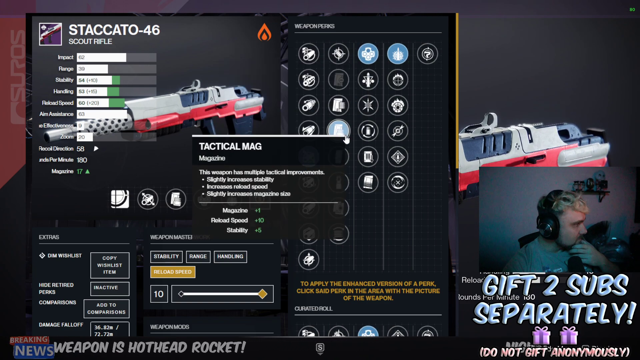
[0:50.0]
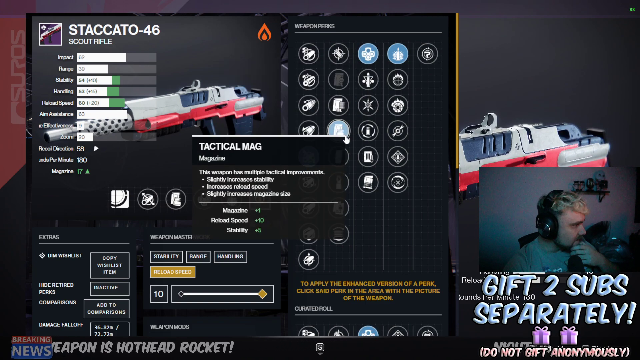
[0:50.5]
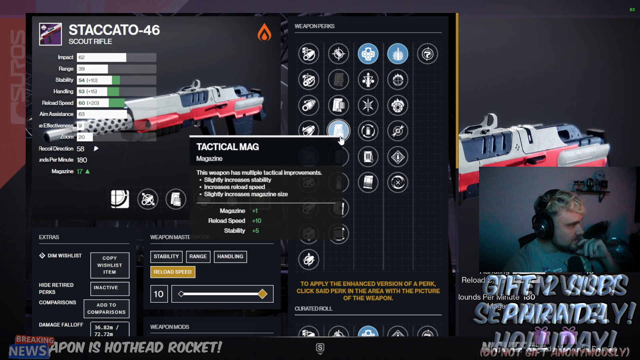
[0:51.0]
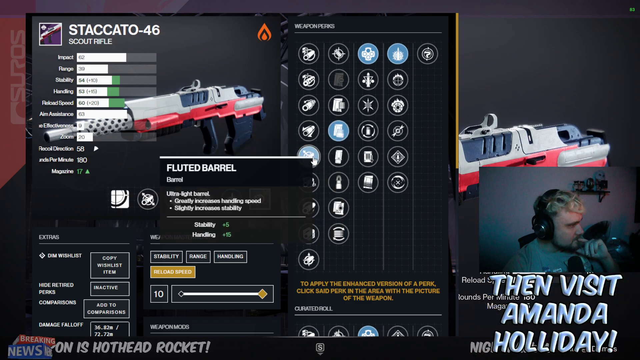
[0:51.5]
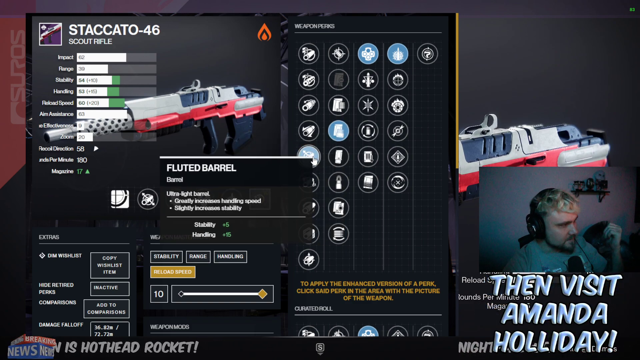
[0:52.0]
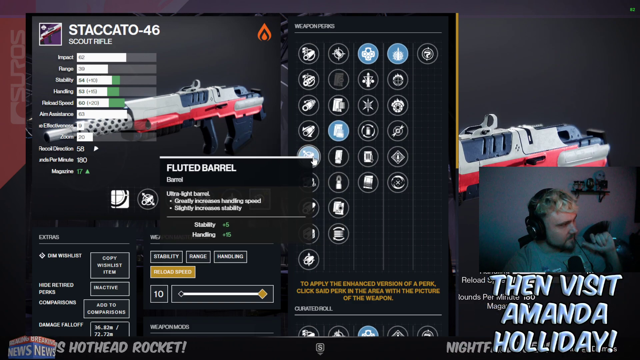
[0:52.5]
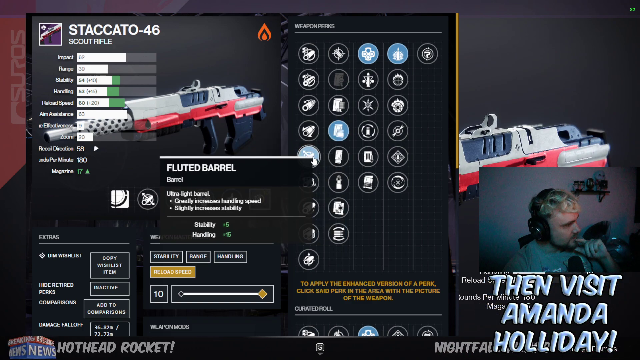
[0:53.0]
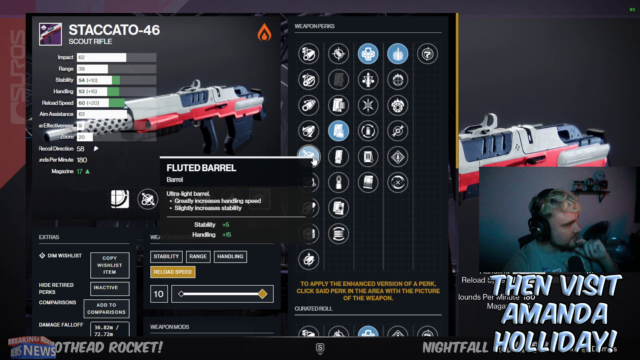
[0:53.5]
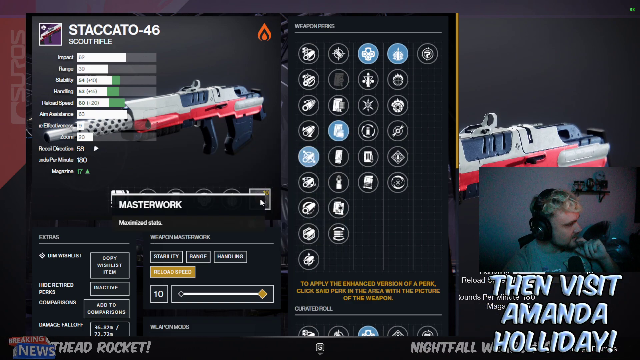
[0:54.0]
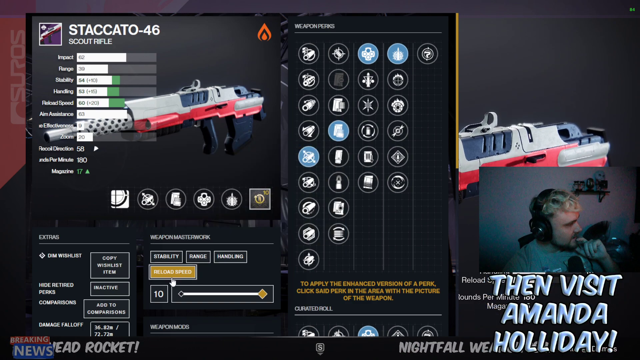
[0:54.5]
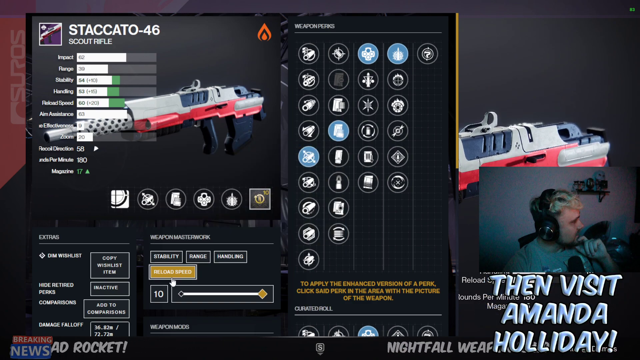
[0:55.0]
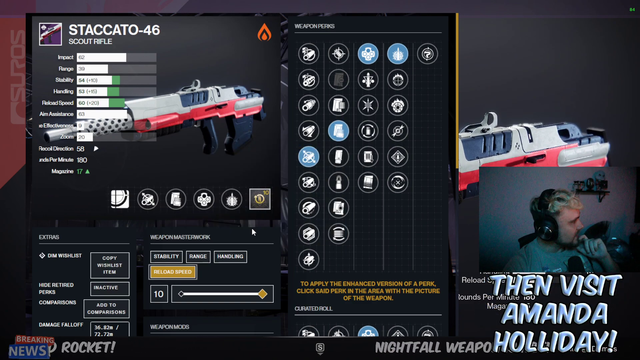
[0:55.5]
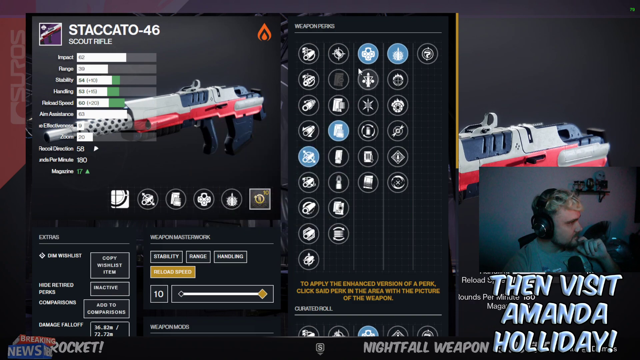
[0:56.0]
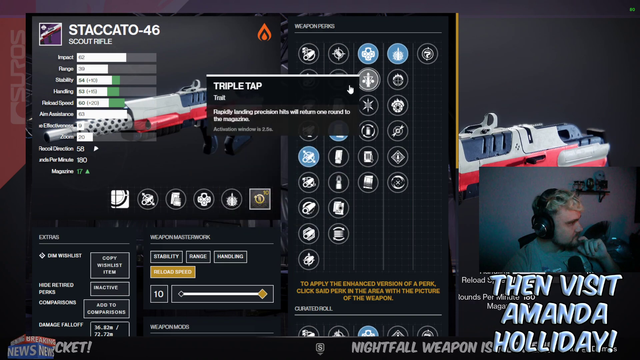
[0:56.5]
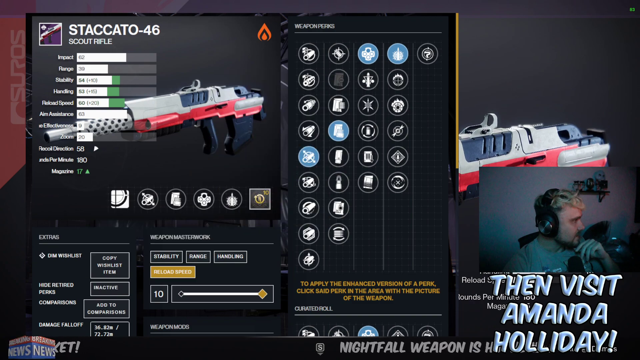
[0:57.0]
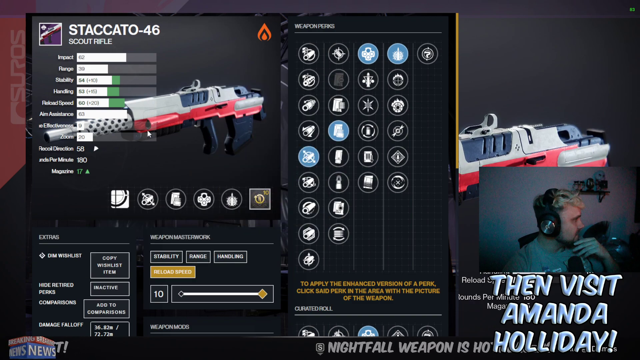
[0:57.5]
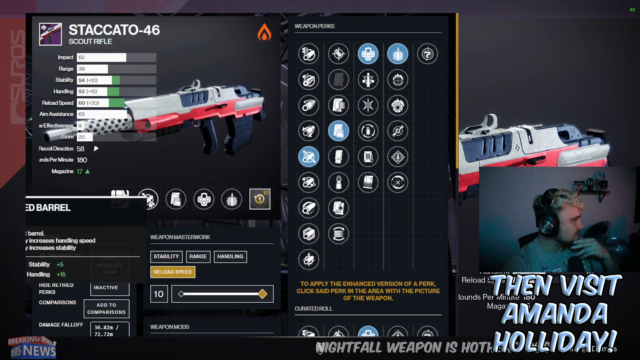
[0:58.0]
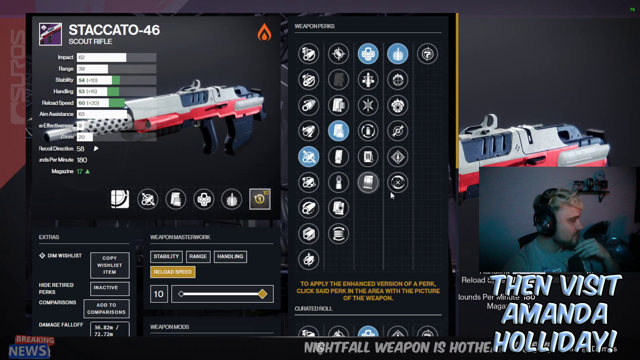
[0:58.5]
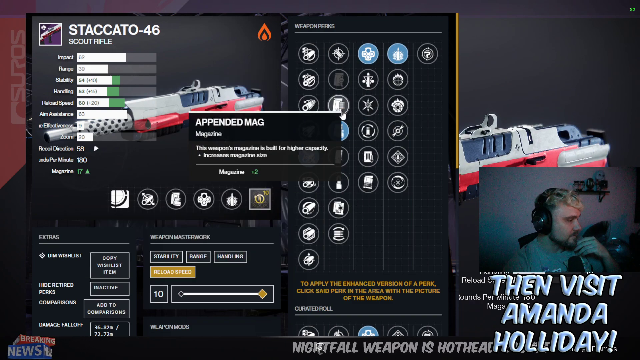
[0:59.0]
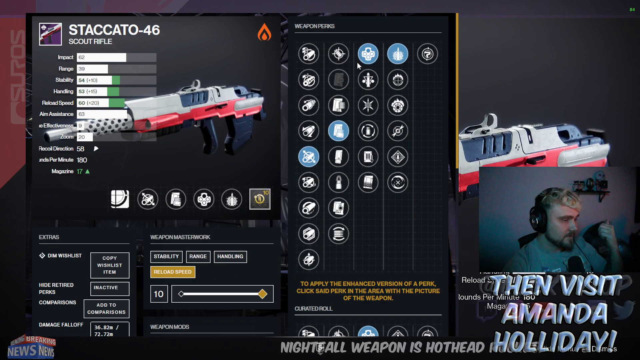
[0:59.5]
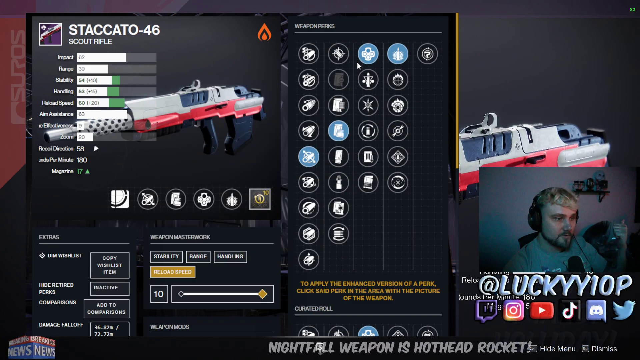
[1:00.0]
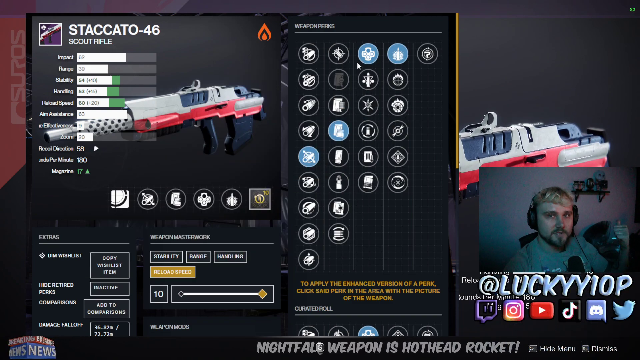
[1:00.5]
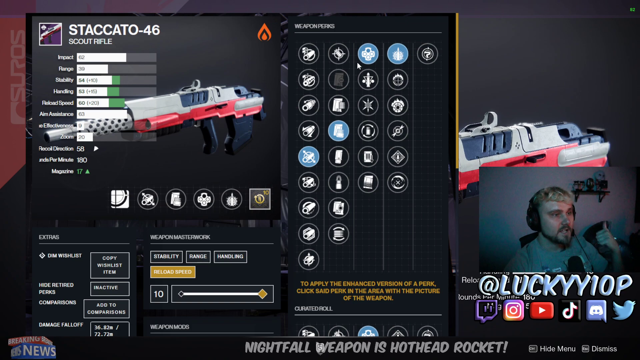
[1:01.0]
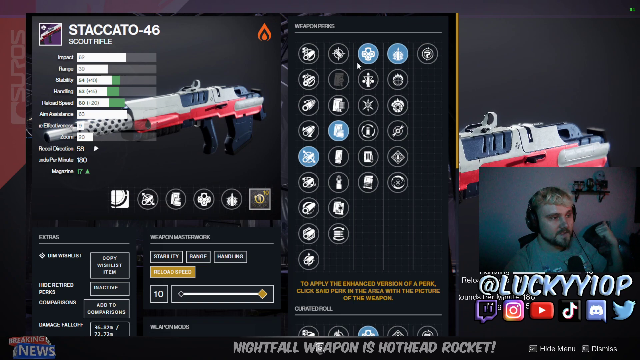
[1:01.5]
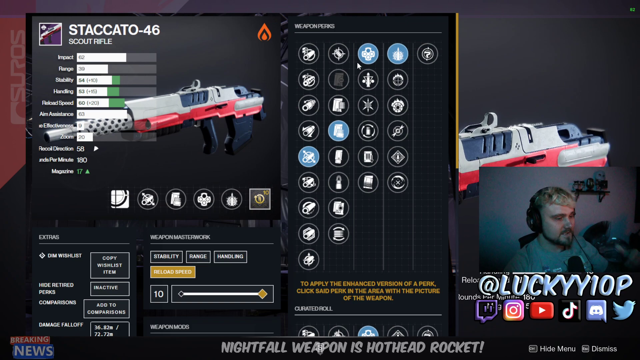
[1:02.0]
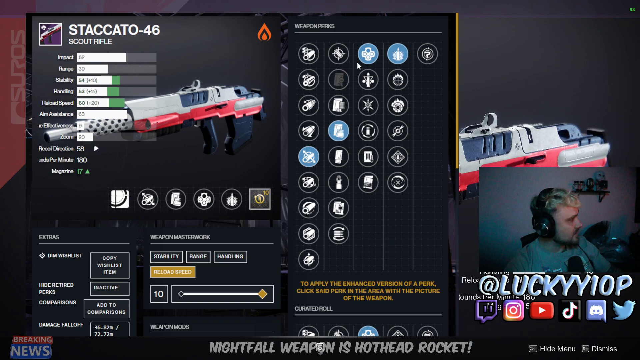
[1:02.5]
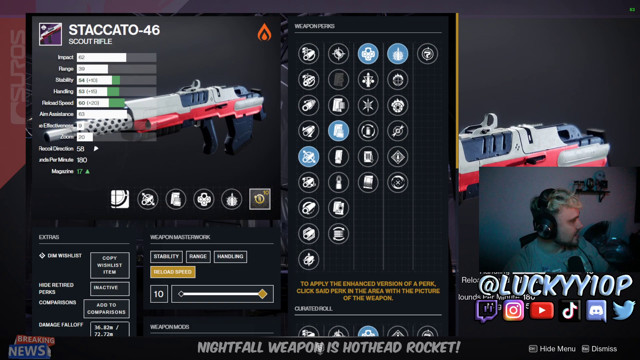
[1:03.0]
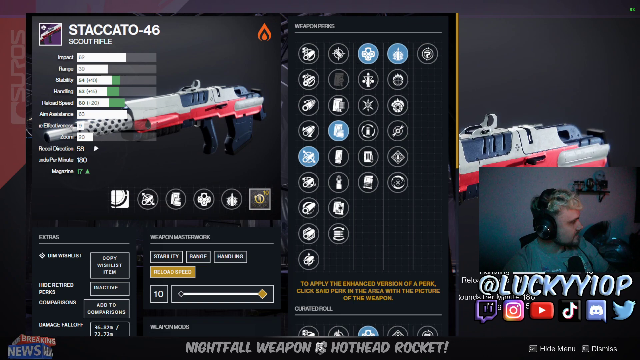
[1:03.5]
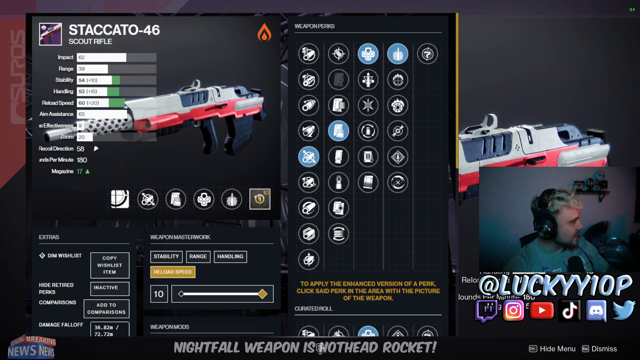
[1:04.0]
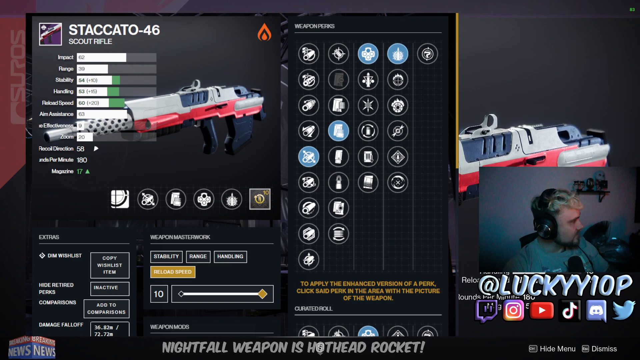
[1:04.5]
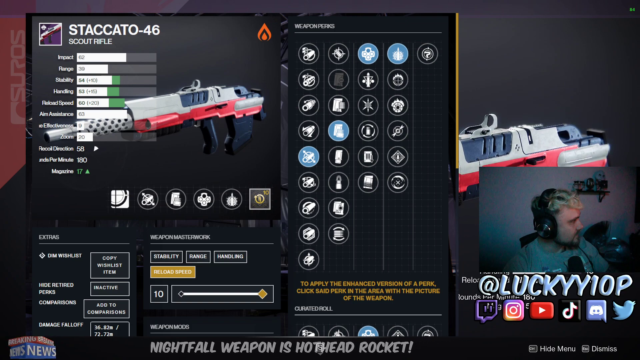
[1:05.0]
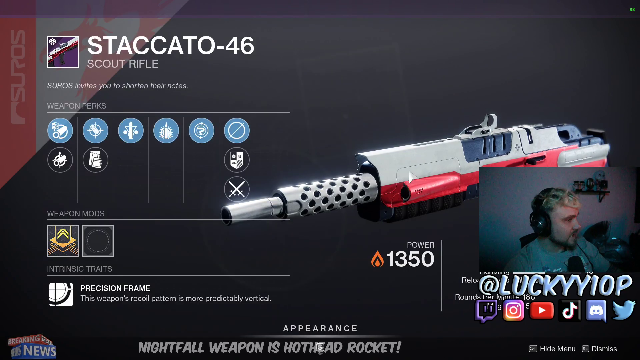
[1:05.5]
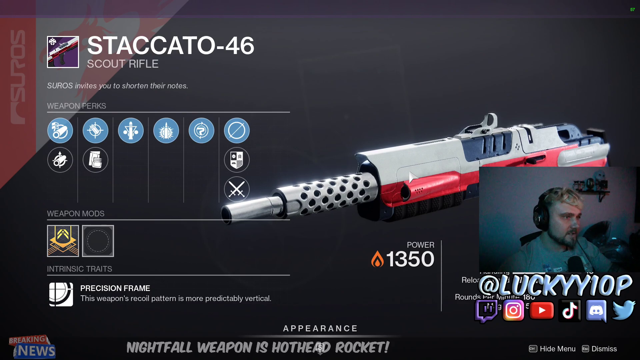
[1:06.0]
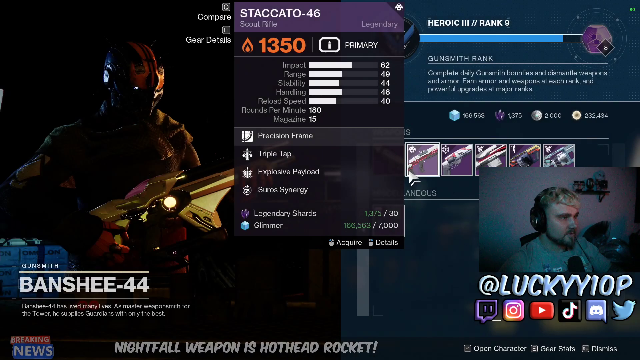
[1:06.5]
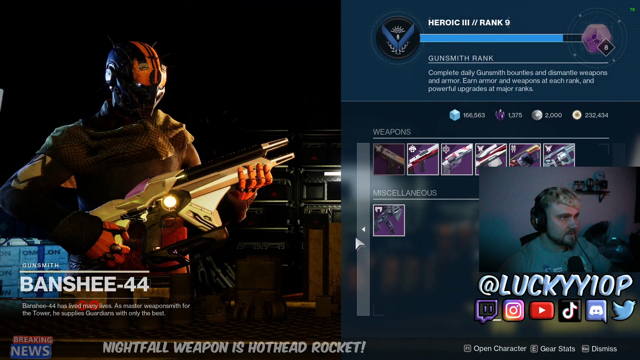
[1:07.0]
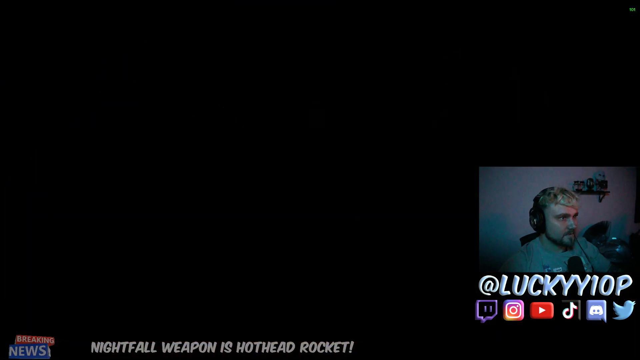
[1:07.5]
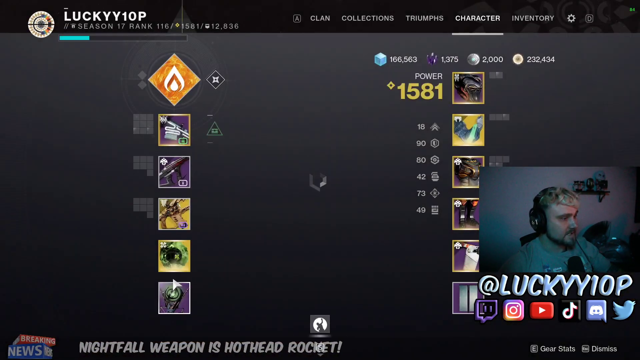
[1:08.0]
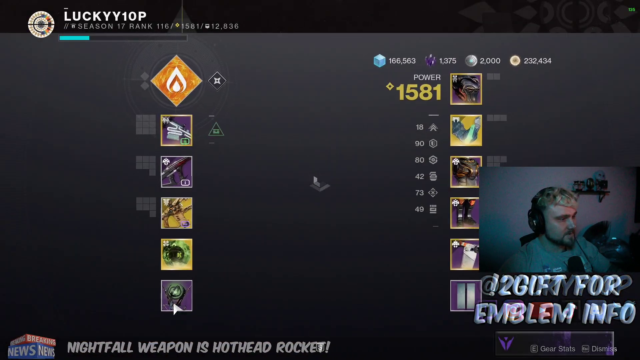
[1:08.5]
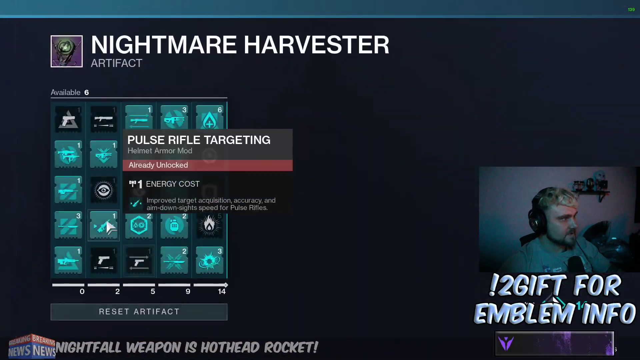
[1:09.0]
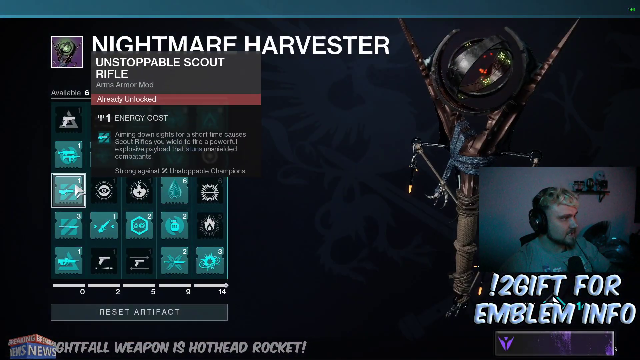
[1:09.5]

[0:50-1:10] The streamer continues deciding between a few perks, hovering over Triple Tap and appearing to explain something about the overall weapon. He goes back to the weapon and seems to open another type of loadout, pointing toward "fluted barrel" and kind of pointing over the weapon. He talks, goes back to the previous page, and clicks another button. The screen once again shows his character on the left-hand side holding the weapon. On the right-hand side are the weapons he has available, and under miscellaneous is an icon of another weapon. The weapons are mostly white and red, all on a purple background, with square icons outlined in white. In the center above the weapons is a light blue item that looks like an ice cube with "166583", followed by a purple icon with the numbers "1375". Next to that is a silver circle with the number "2000", followed by a fourth item that looks like a yellow circle with dark gray in the middle and the number "232434".